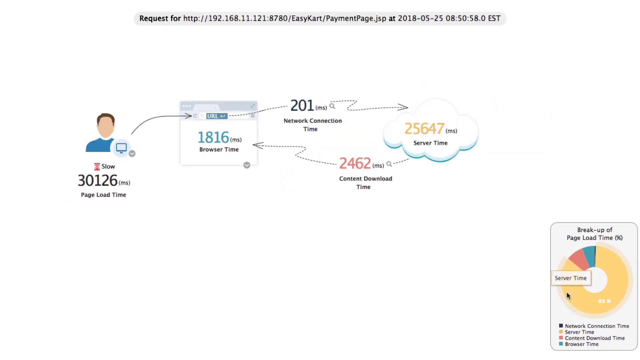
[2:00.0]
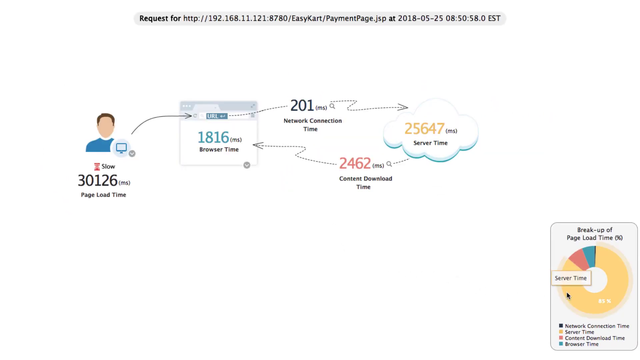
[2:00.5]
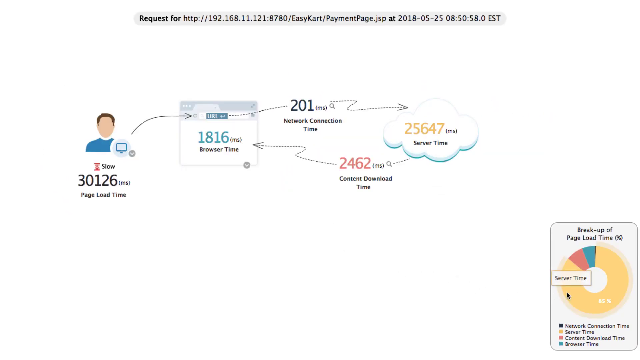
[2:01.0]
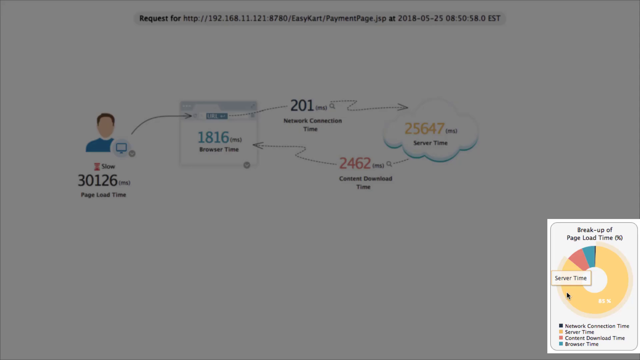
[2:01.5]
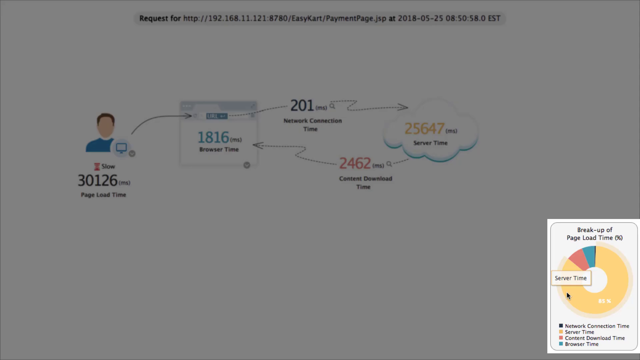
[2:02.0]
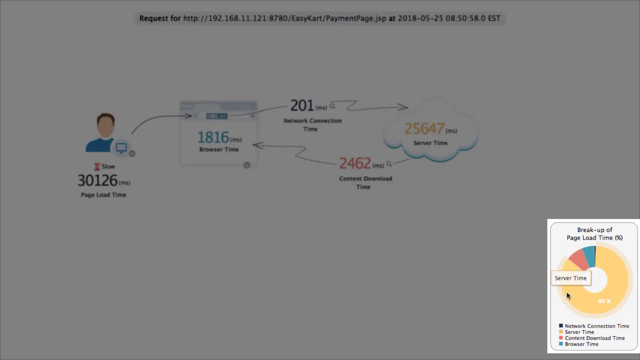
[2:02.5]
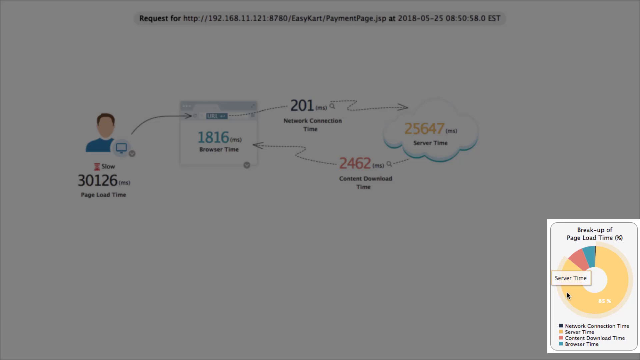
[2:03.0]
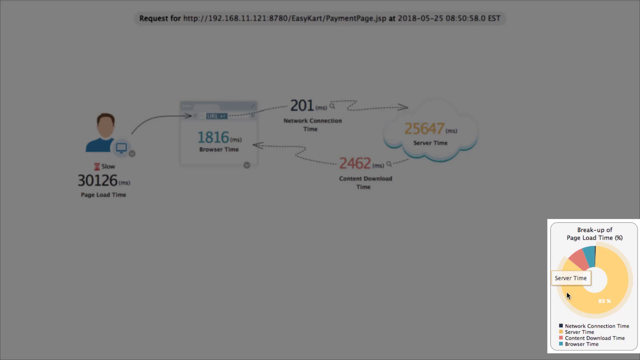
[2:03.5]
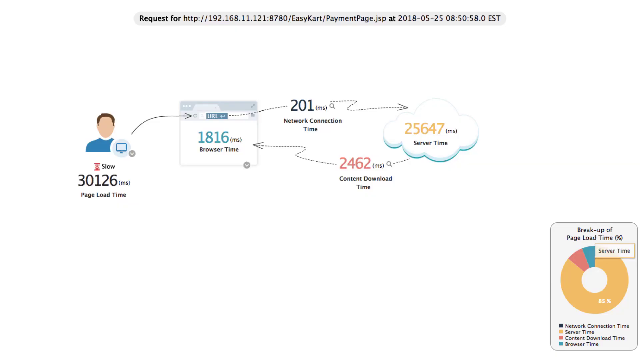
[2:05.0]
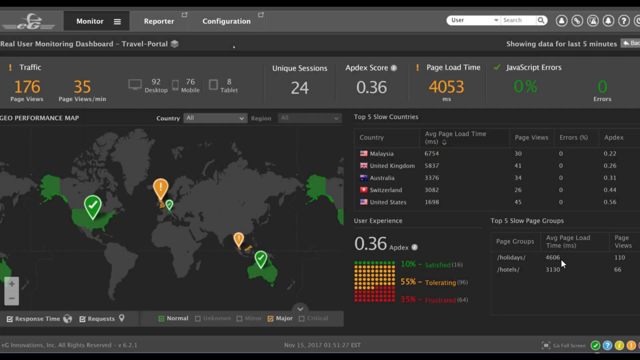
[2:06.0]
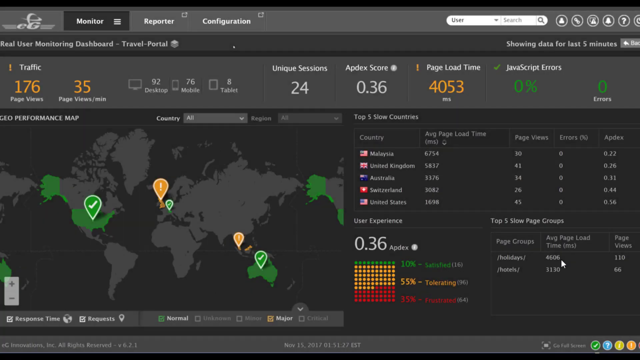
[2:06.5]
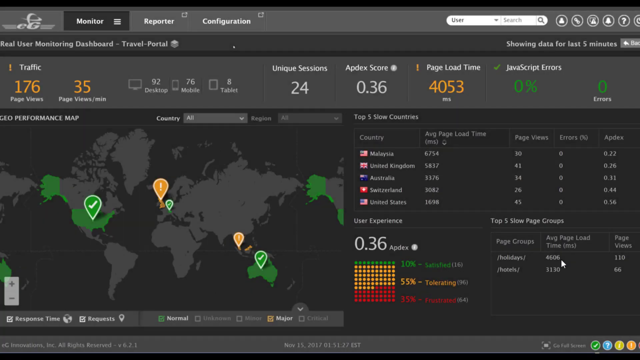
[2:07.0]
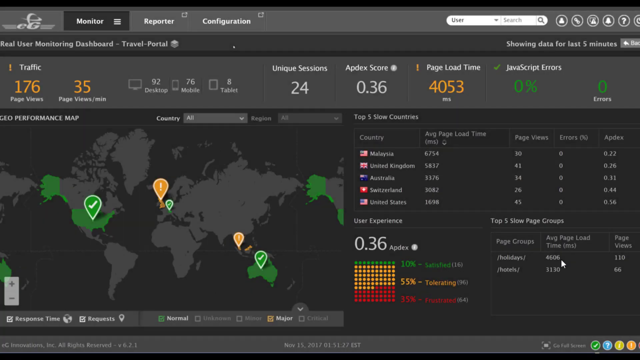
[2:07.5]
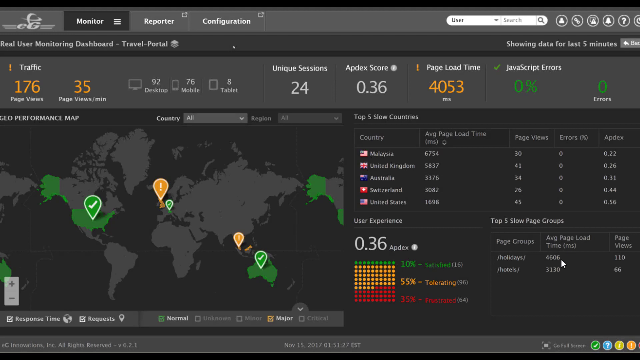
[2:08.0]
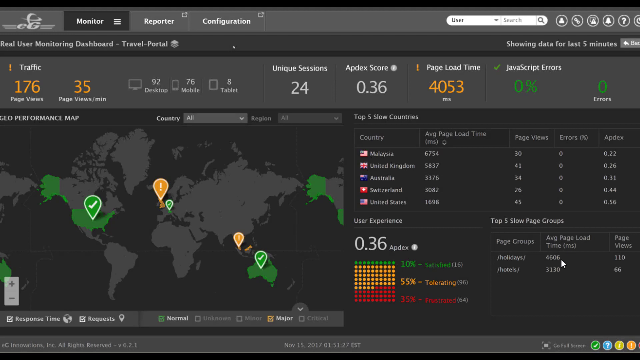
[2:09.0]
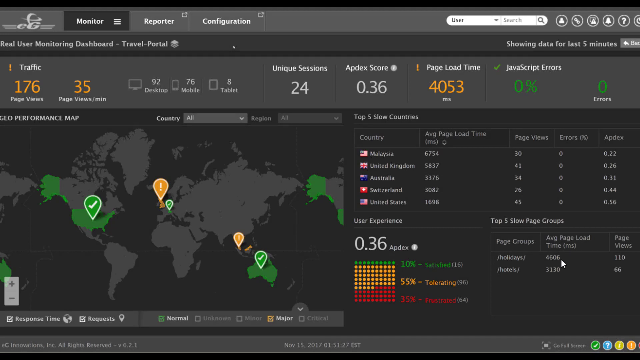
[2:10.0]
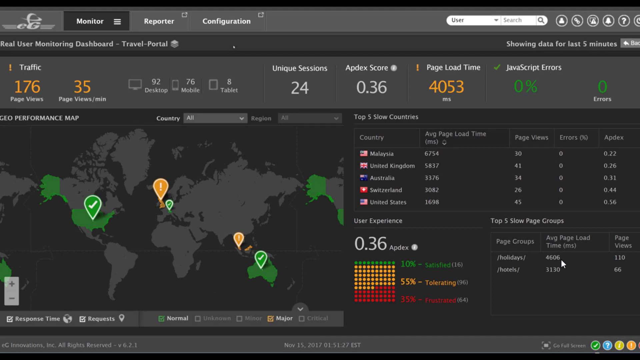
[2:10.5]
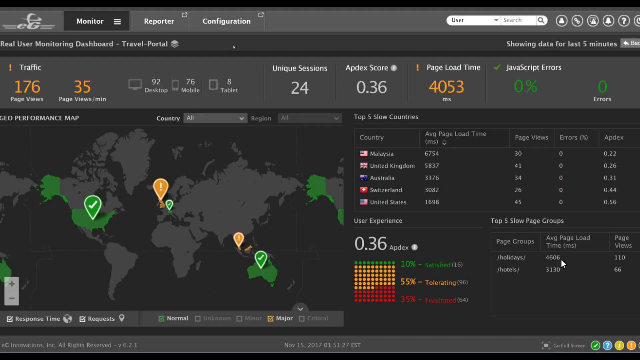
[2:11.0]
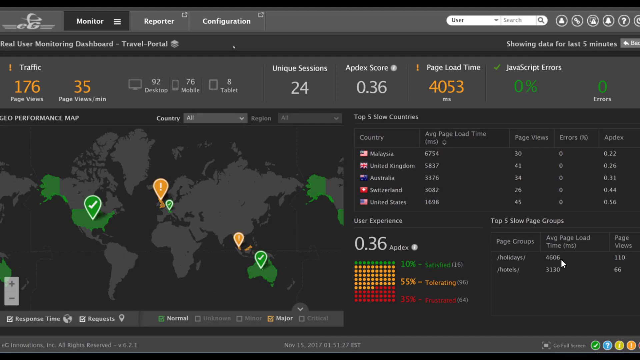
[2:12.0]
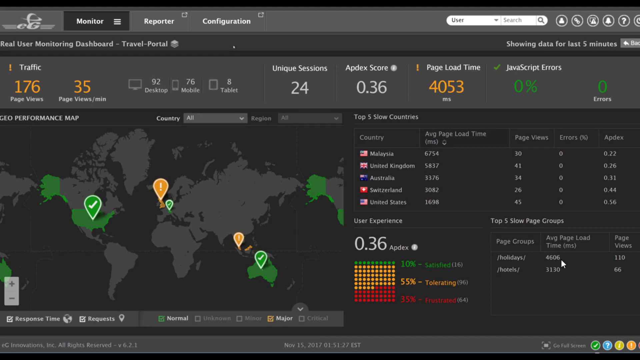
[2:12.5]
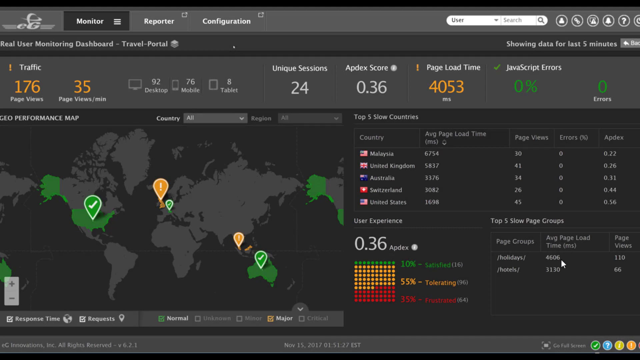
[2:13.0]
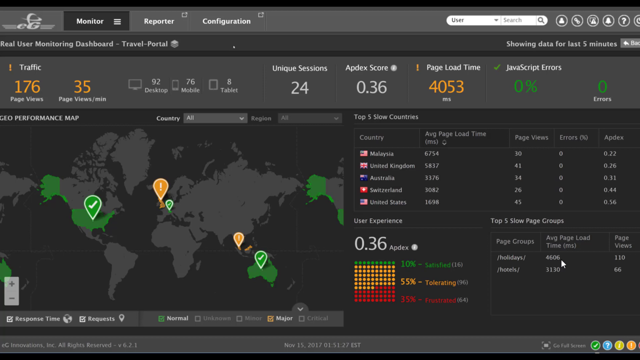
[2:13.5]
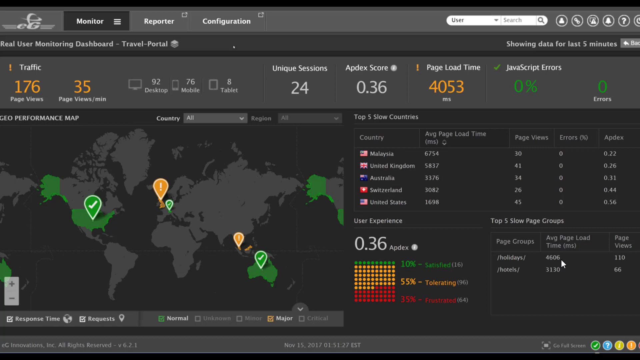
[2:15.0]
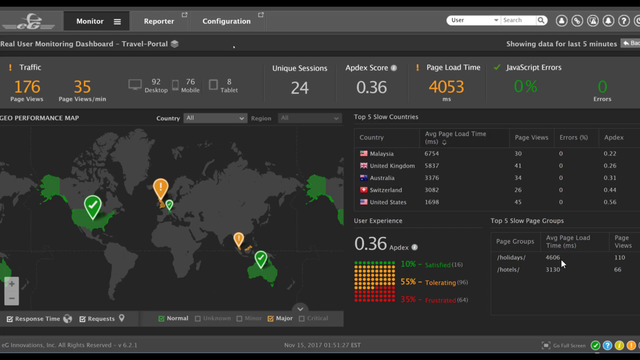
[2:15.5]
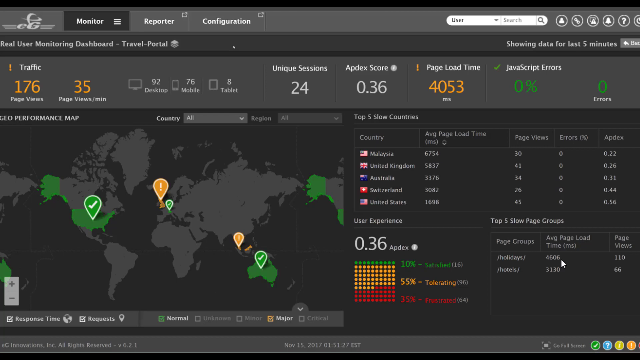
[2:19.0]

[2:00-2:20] The black mouse pointer is now in the bottom right corner and clicks on a graphic titled "Breakup of Page Load Time." After a few moments, the screen fades to black and transitions to another screen titled "Real User Monitoring Dashboard - Travel-Portal" at the top left, with information such as traffic, page views, unique sessions, Apdex score, page load time, and JavaScript errors. Below that, in the bottom center-to-left portion, is a world map with markers on it for countries like the U.S. and Australia. To the right of the map is information about the top five slow countries, with Malaysia at the top of the list. Below that, in the bottom right, are user experience and the top five slow page groups. The mouse cursor is now white and rests next to one of the average page load time statistics.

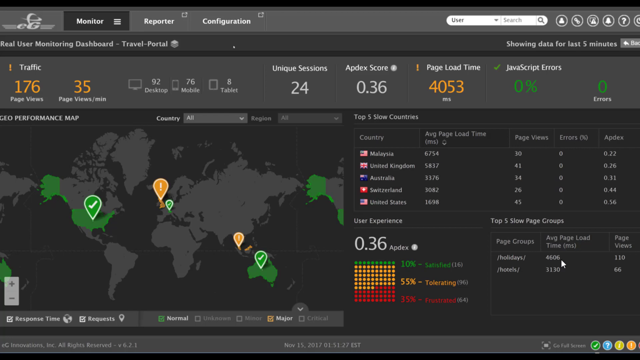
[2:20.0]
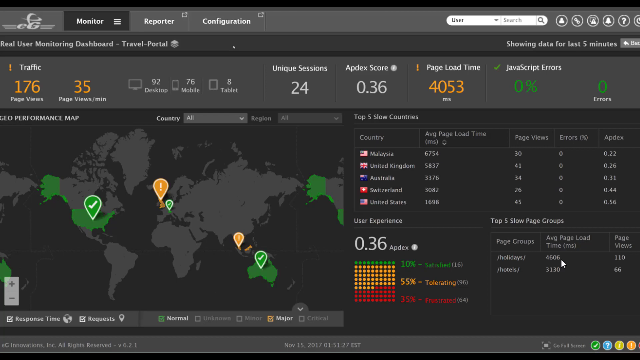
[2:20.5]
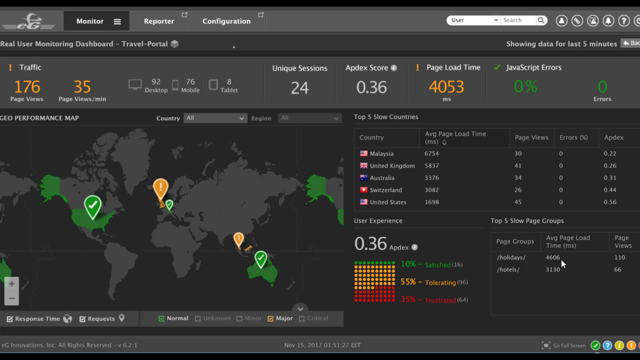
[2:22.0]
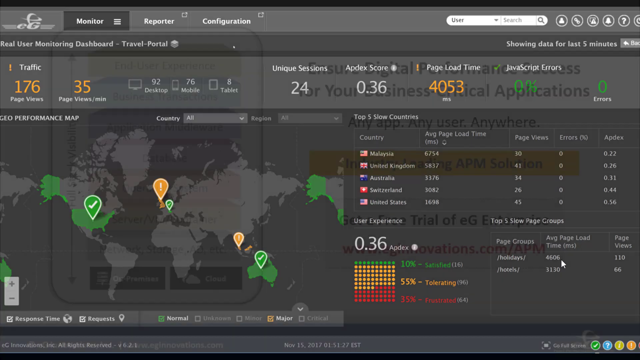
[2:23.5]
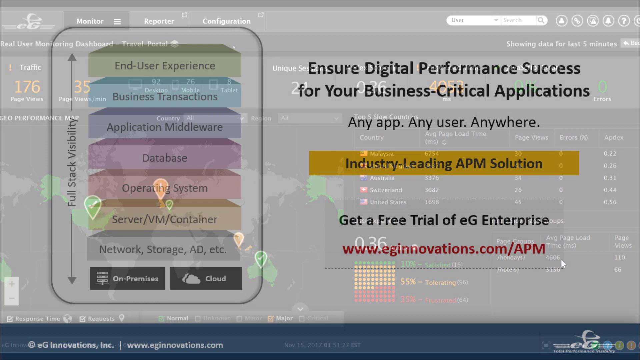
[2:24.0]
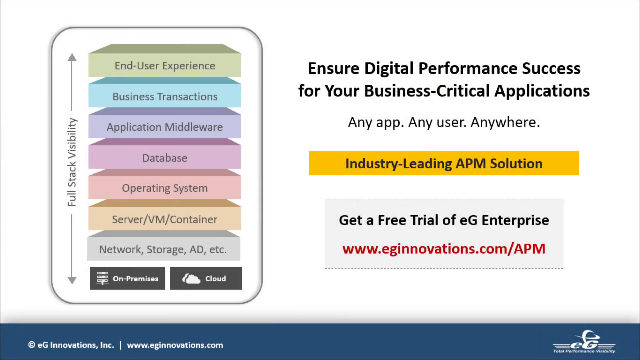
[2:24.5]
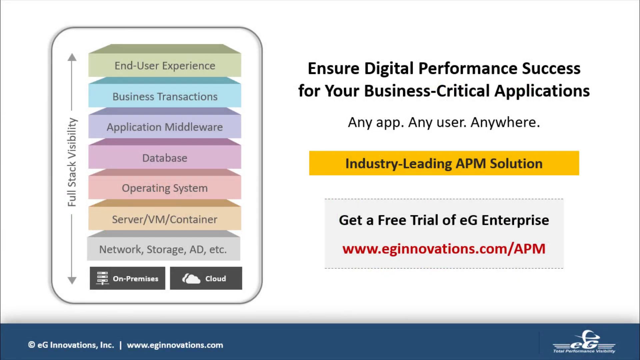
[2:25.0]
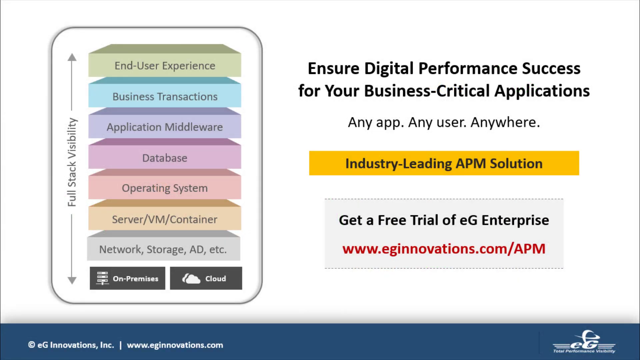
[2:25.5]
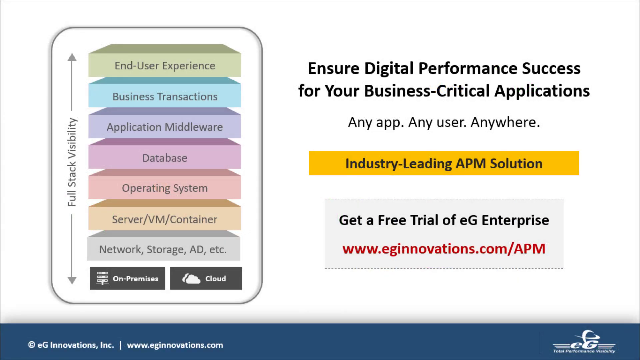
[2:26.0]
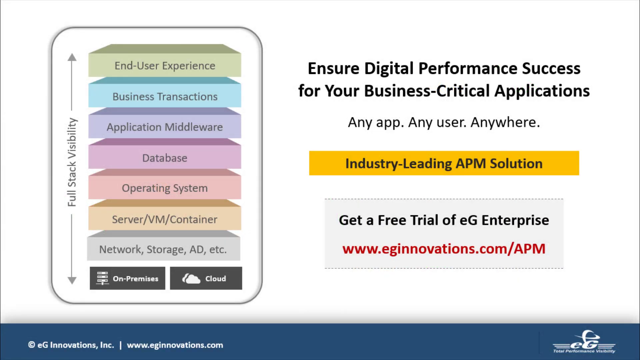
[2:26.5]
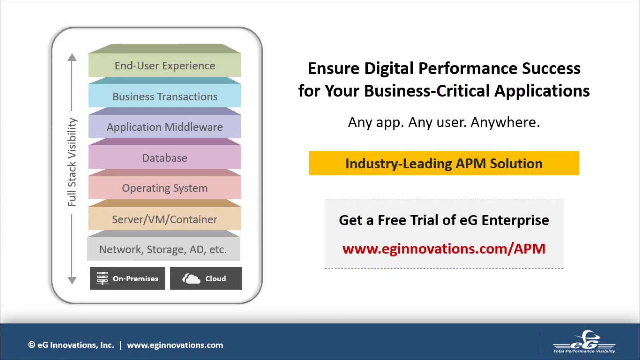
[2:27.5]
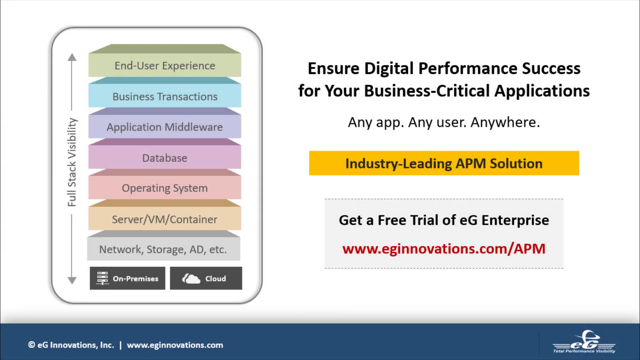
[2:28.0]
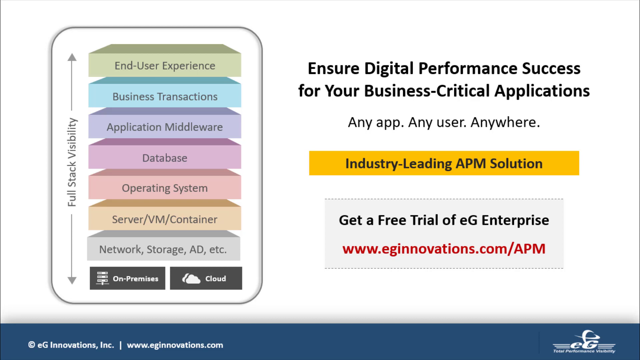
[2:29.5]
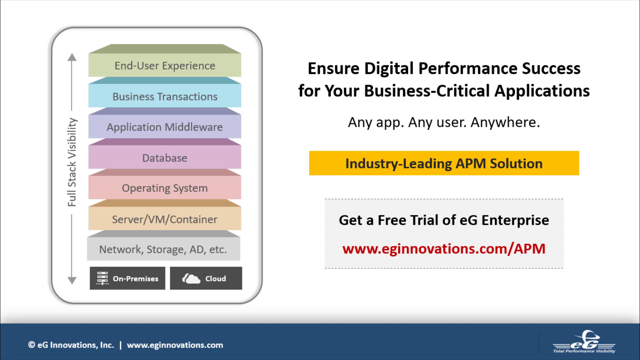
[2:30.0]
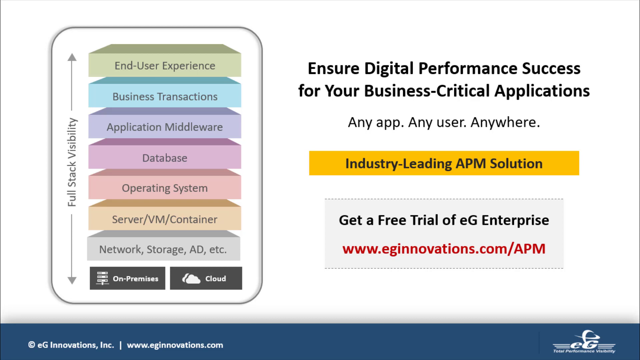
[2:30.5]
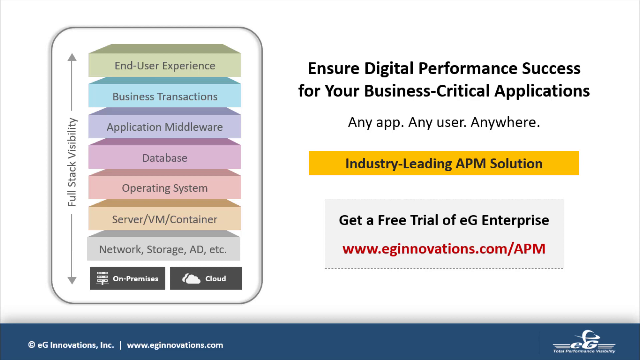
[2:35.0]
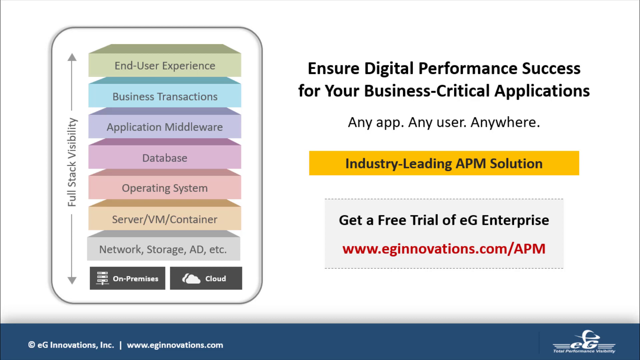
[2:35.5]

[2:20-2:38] The Travel Portal information stays on screen for a few moments, with the white mouse cursor still in the same position, resting next to the number 4606, directly to the bottom right of it. After a few moments, the screen fades into a final screen with a white background. On the left side is a graphic for "Full Stack Visibility" with different colored layers from top to bottom: "End User Experience," "Business Transactions," "Application Middleware," "Database," "Operating System," "Server/VM/Container," and "Network, Storage, AD, etc." On the right, a title says "Ensure Digital Performance Success for Your Business-Critical Applications." Below that it says "Any App. Any User. Anywhere." Below that, in a yellow rectangle, it says "Industry-Leading APM Solution," and directly below that it says "Get a Free Trial of eG Enterprise," followed by the website "www.eginnovations.com/APM."